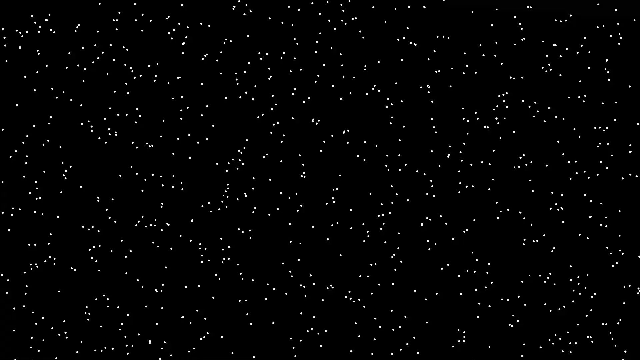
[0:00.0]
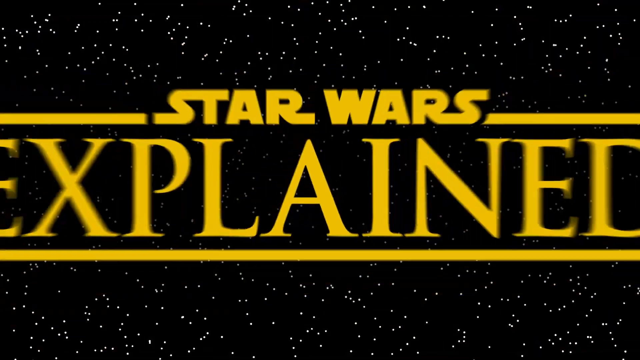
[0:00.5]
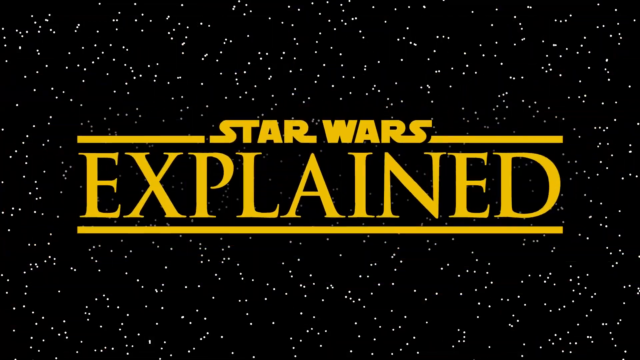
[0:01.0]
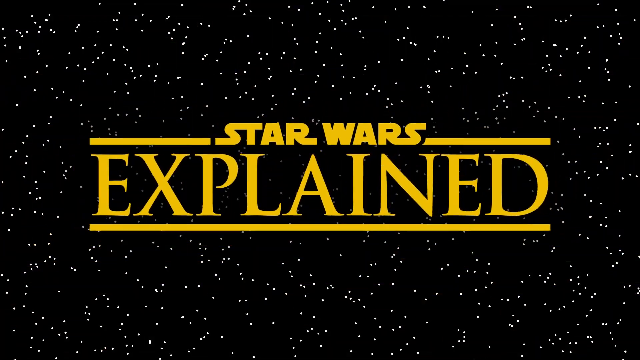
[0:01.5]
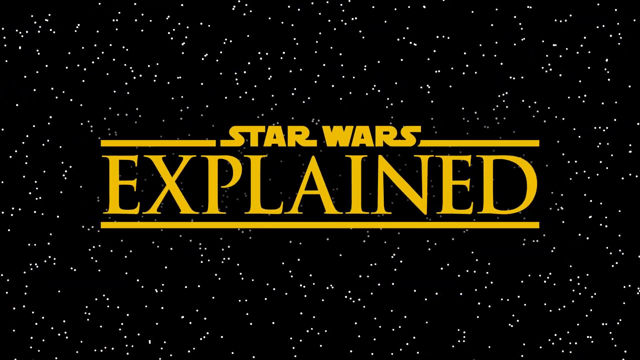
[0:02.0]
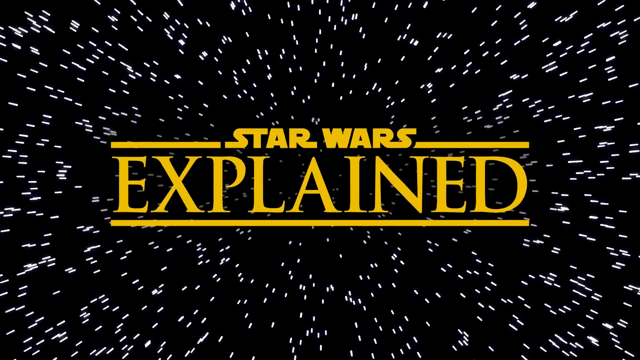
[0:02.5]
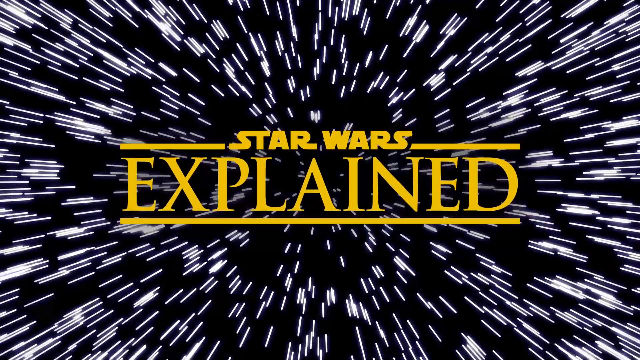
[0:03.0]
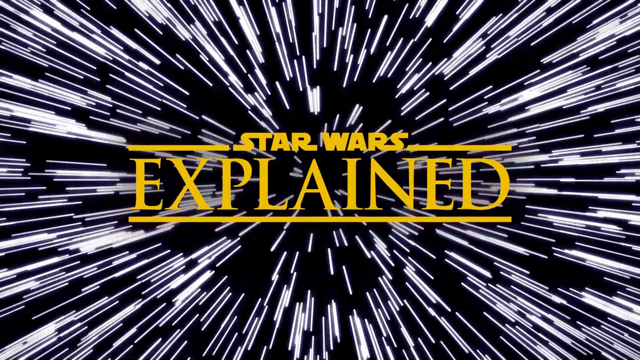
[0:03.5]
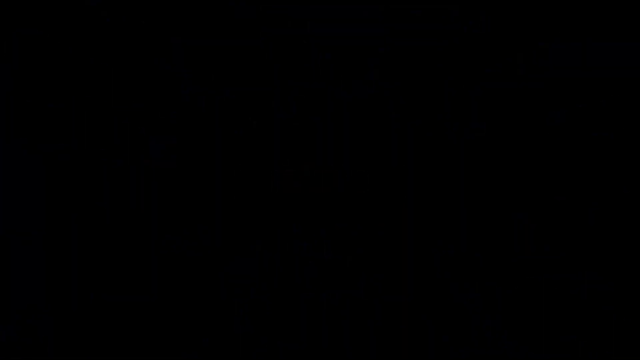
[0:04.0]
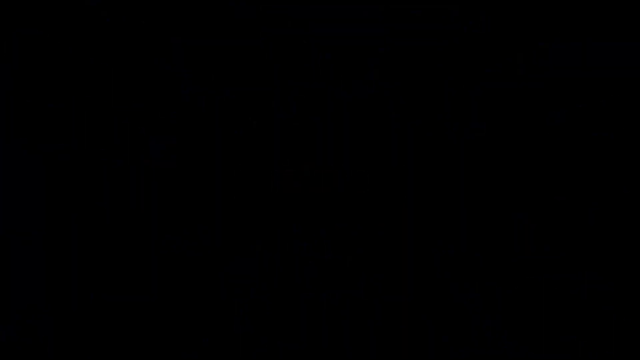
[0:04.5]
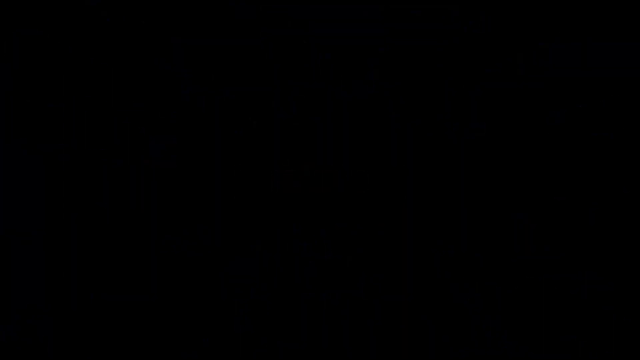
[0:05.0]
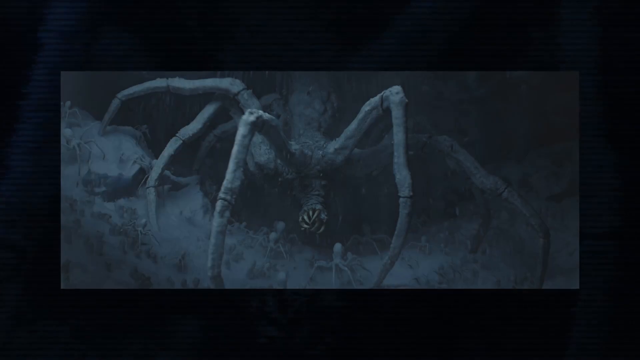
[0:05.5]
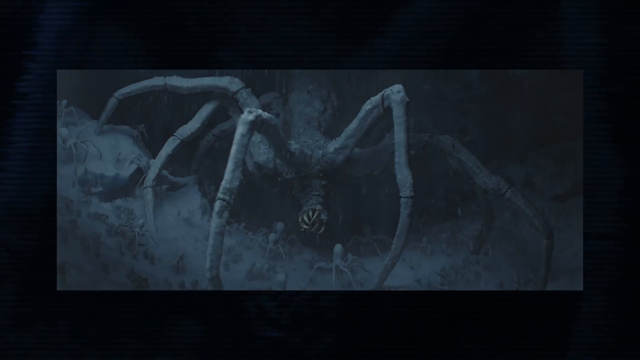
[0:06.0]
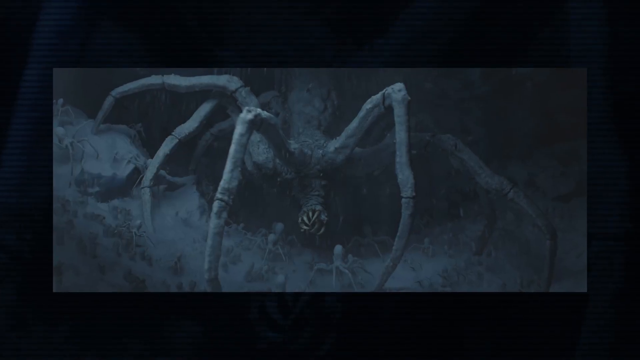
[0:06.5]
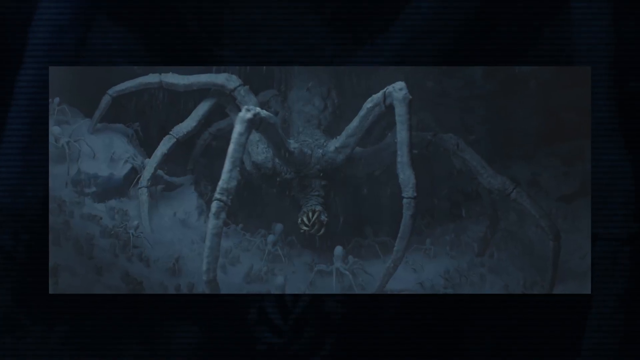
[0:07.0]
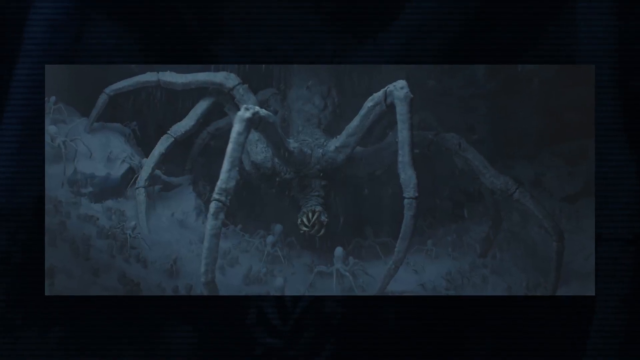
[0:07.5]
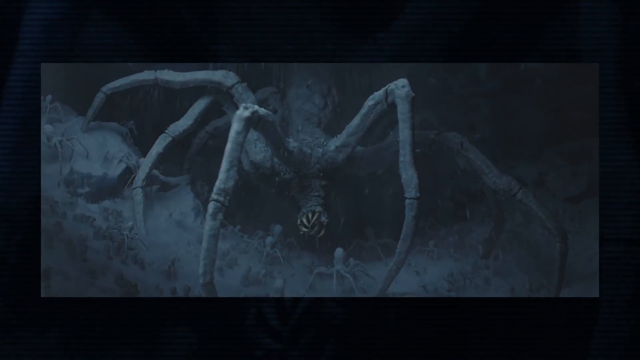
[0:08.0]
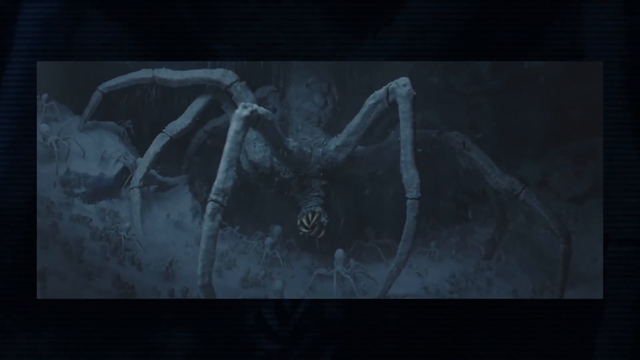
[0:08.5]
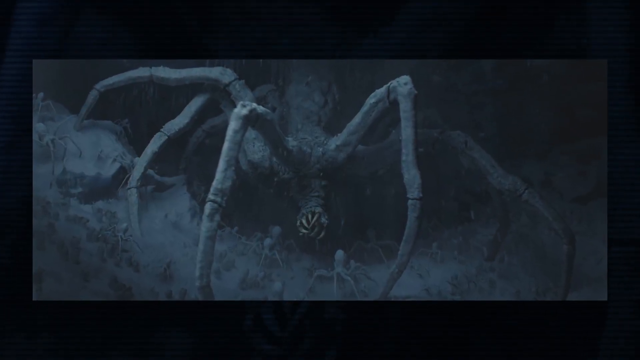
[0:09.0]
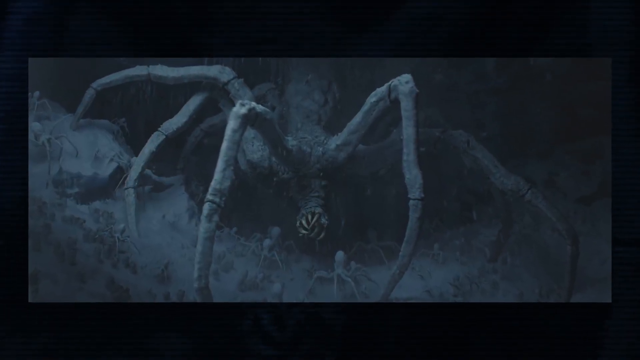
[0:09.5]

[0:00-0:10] The video opens on a screen that looks like outer space: black with tiny white dots that look like stars. A title appears reading "Star Wars Explained," written in the same style as the Star Wars movie. It appears to move backward, and bursts of light come toward the camera. Everything fades to black, and a black-and-white photograph appears of a creature that looks like a giant spider. At its bottom is what looks like a round mouth filled with long fangs, and there appear to be other similar, smaller creatures on the ground below it.